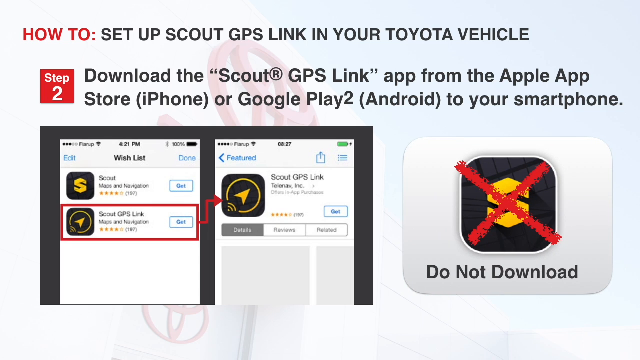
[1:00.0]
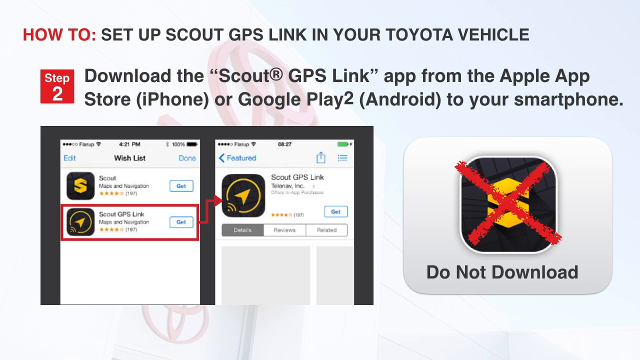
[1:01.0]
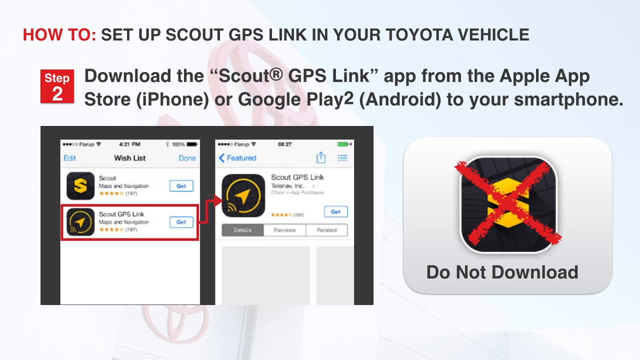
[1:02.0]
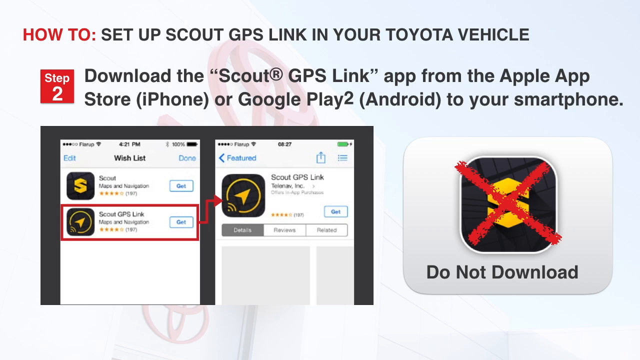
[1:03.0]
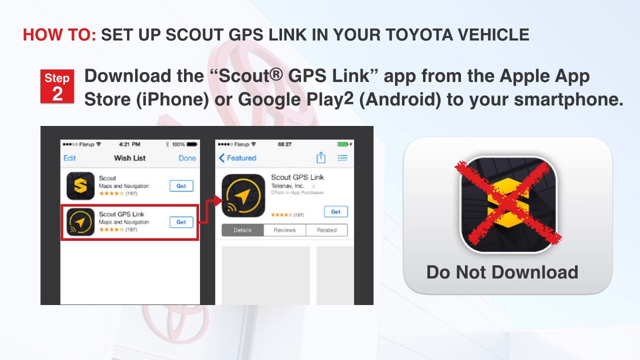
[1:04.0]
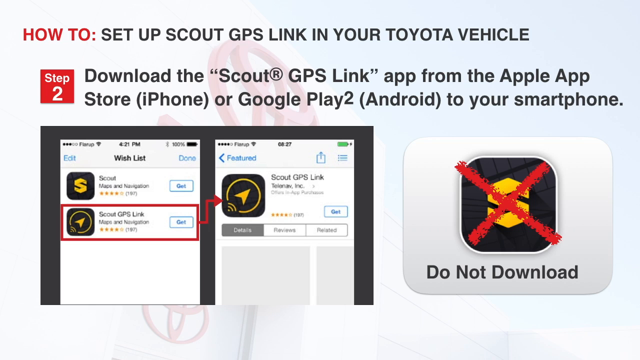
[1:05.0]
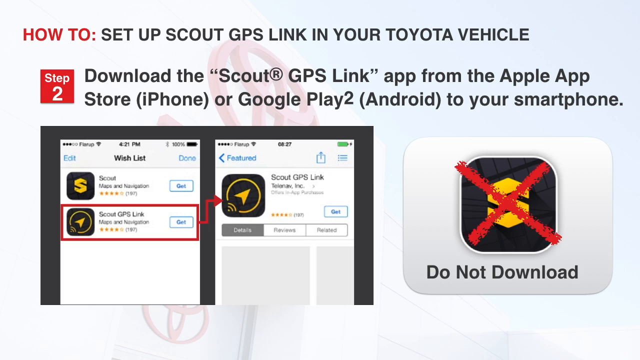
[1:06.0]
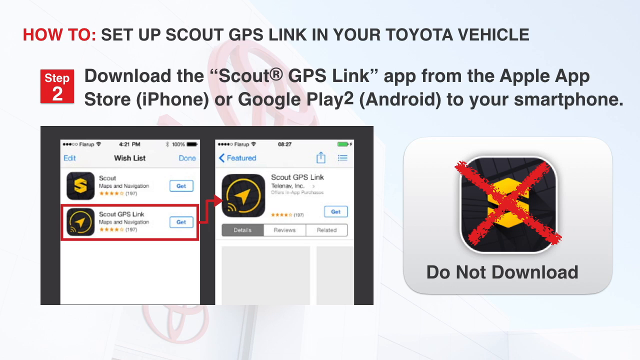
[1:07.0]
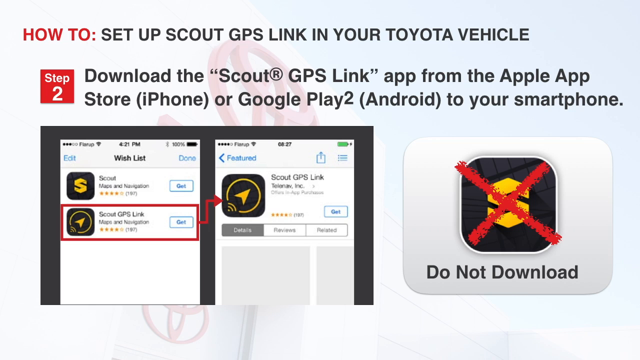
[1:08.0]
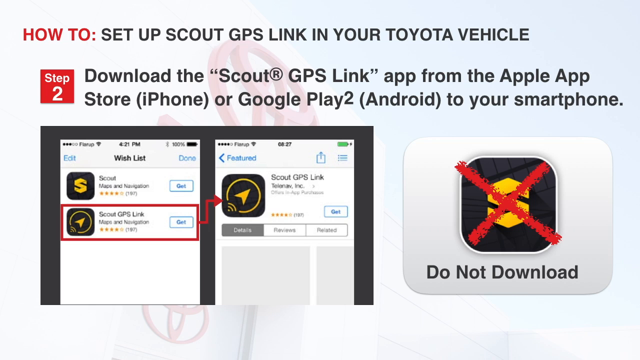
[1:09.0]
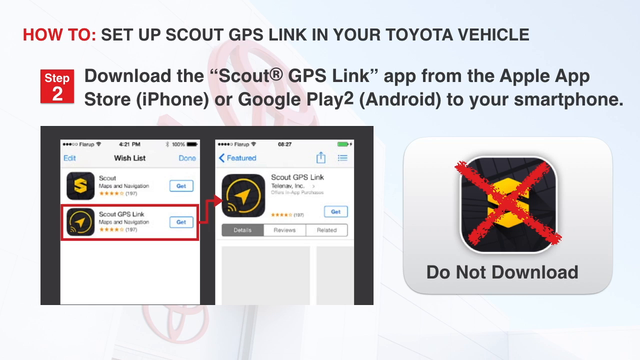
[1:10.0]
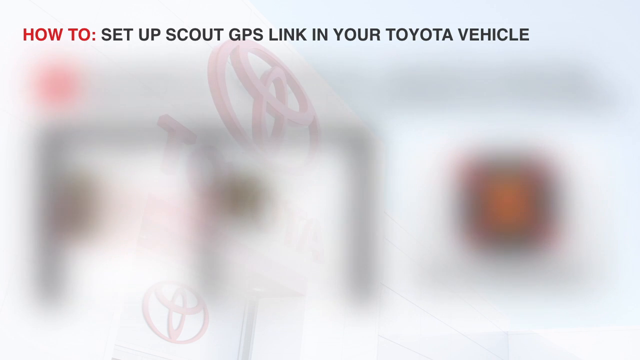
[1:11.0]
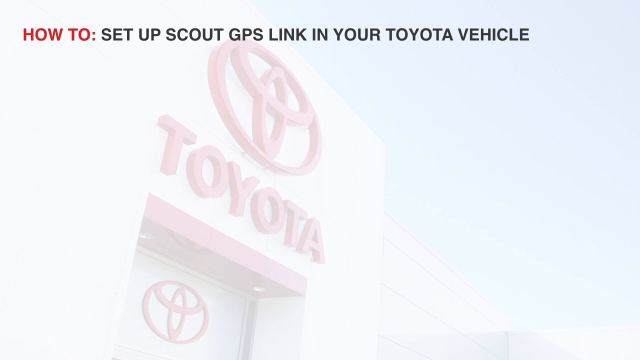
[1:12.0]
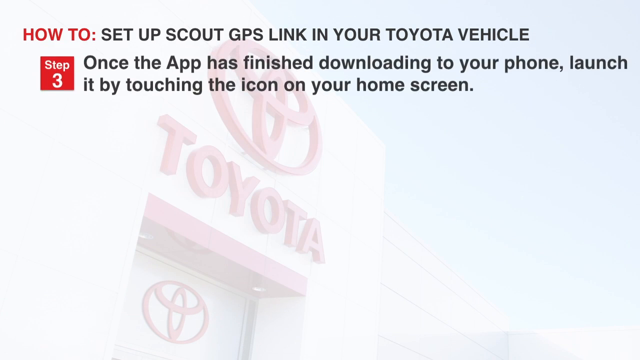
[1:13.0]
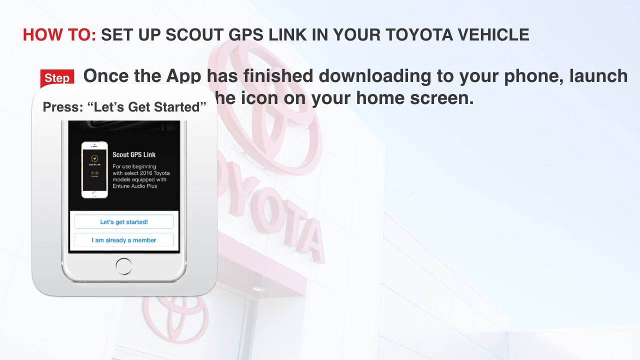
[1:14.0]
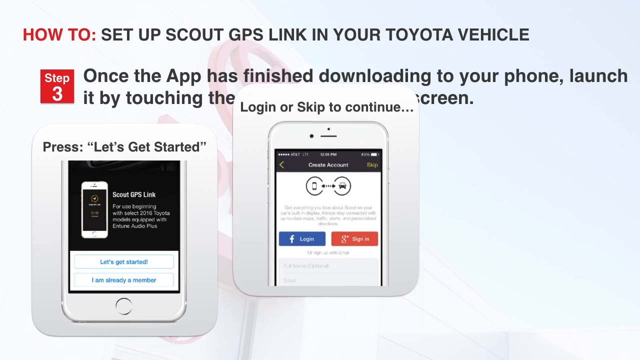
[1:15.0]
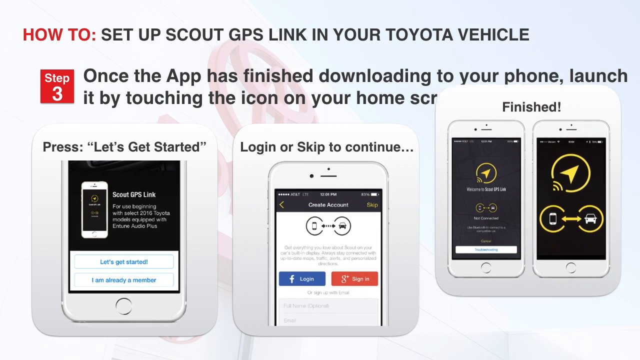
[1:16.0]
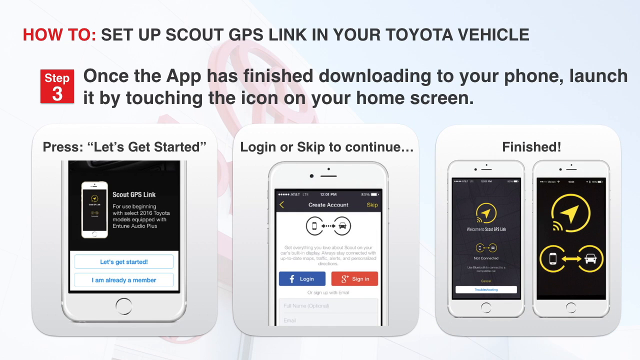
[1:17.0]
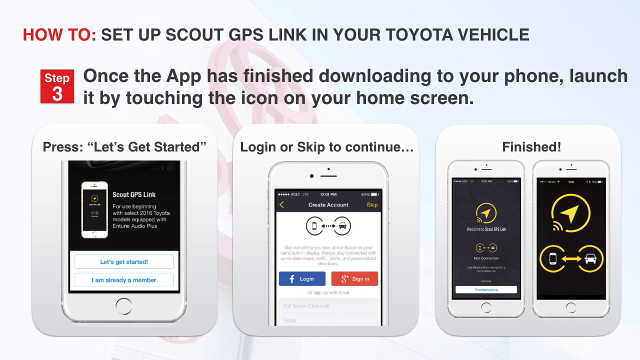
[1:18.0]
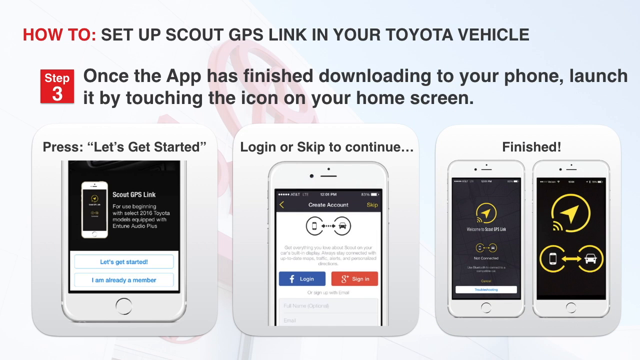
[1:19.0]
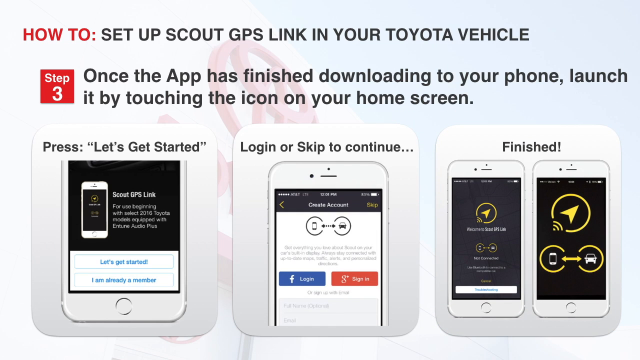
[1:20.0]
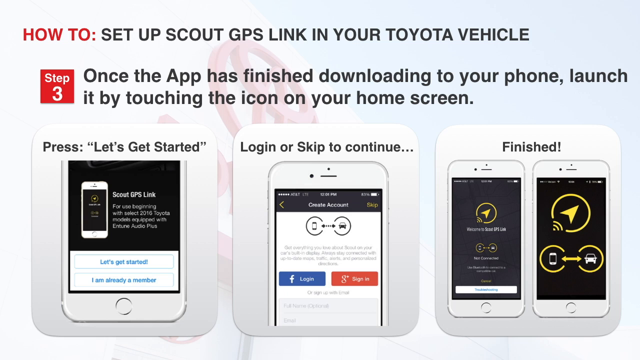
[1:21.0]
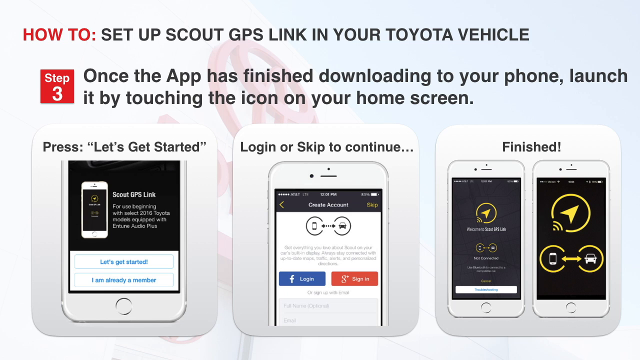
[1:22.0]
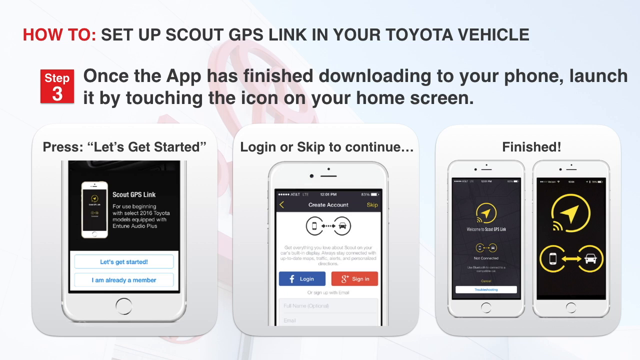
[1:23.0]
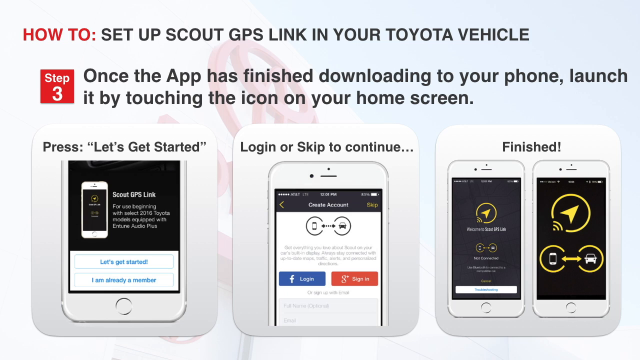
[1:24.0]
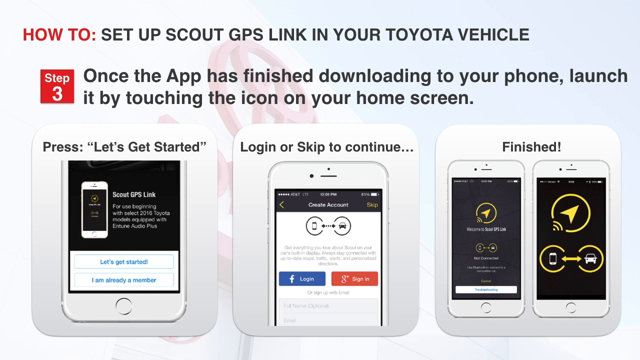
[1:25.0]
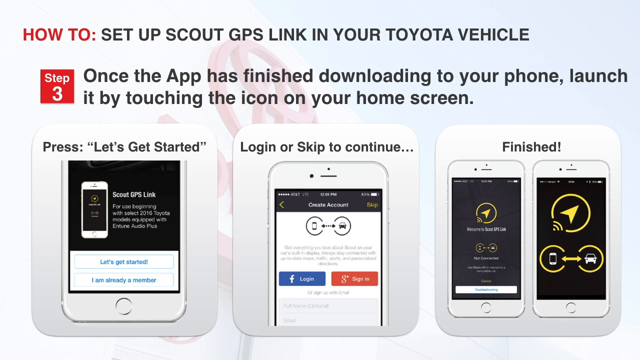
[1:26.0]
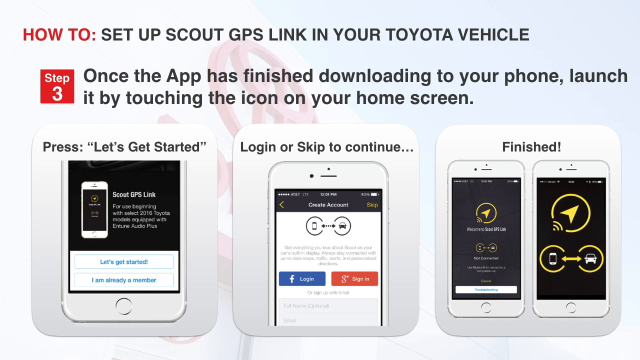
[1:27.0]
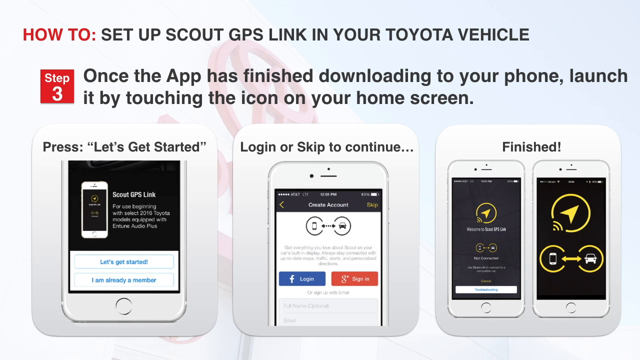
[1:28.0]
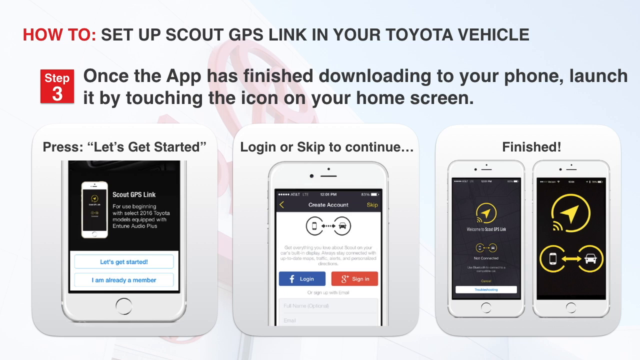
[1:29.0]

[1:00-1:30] Step two is laid out the same way as step one, with a screenshot at the bottom left, but there are no steps at the bottom right; instead there is something like a "do not download" button. It appears to show two different apps and warns against downloading what seems to be an off-brand version of the Scout GPS app, indicating exactly which one to download and kind of circling it in red. Halfway through, the screen changes to step three, laid out the same way except that the bottom has three screenshots. The one on the left says to press "let's get started," the middle one says "log in or skip to continue," and the one on the right says "finished," showing the path to follow to get the app working.